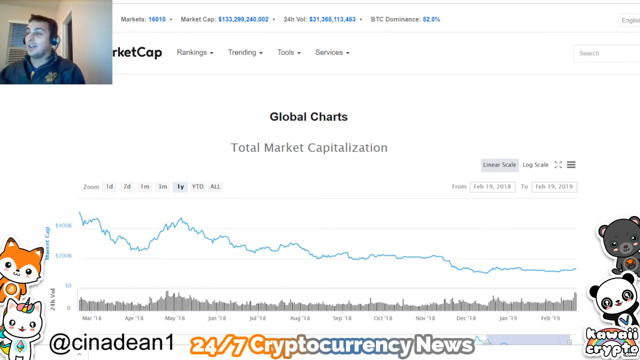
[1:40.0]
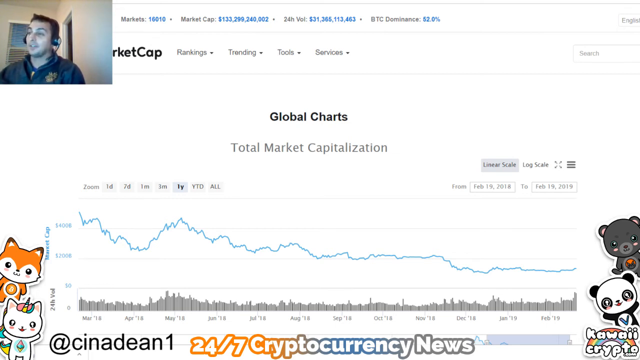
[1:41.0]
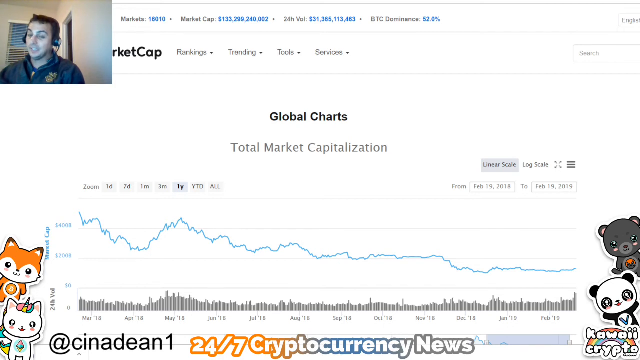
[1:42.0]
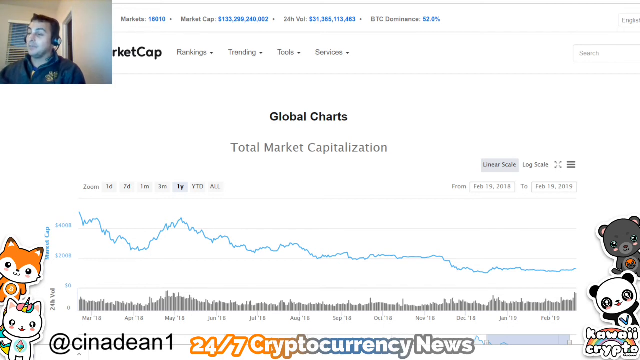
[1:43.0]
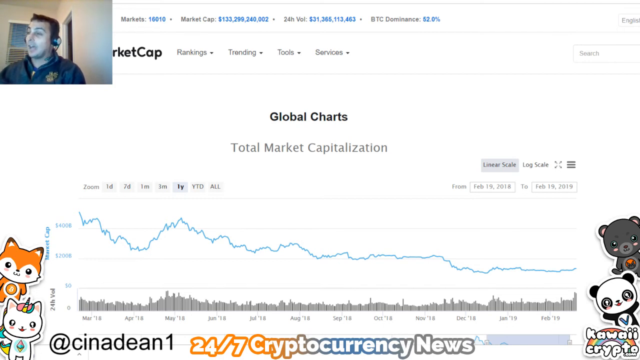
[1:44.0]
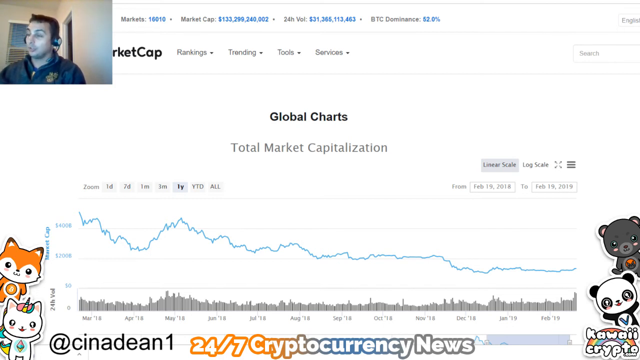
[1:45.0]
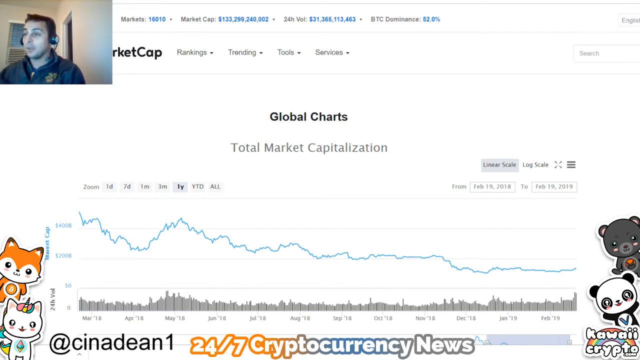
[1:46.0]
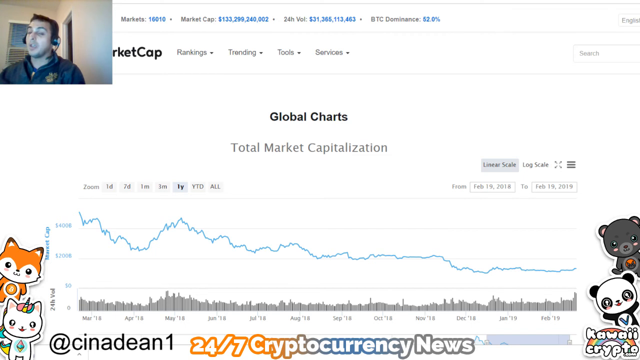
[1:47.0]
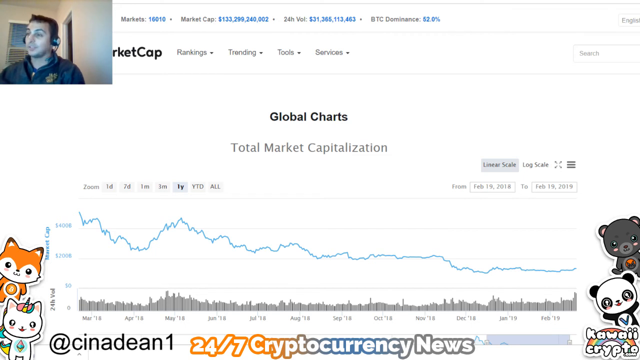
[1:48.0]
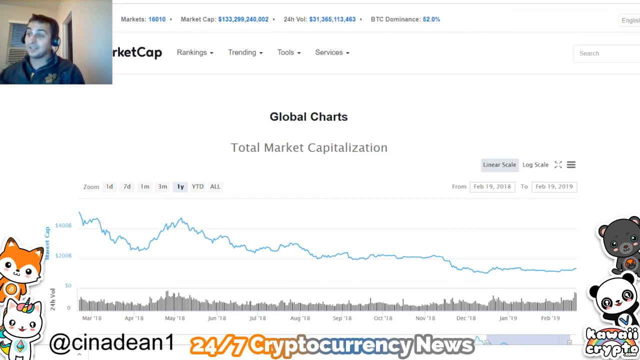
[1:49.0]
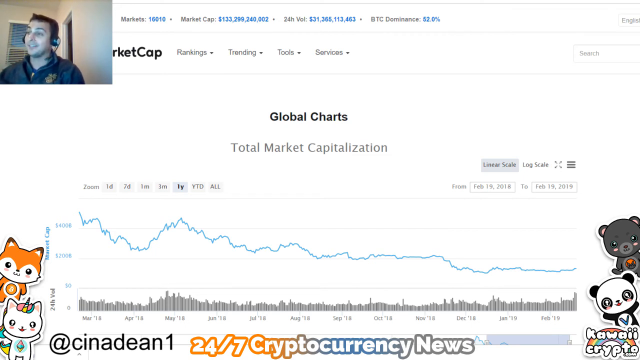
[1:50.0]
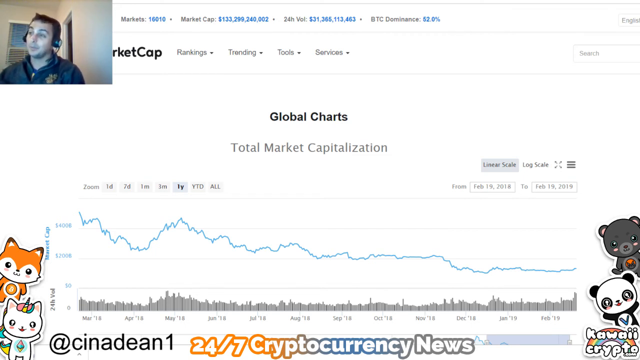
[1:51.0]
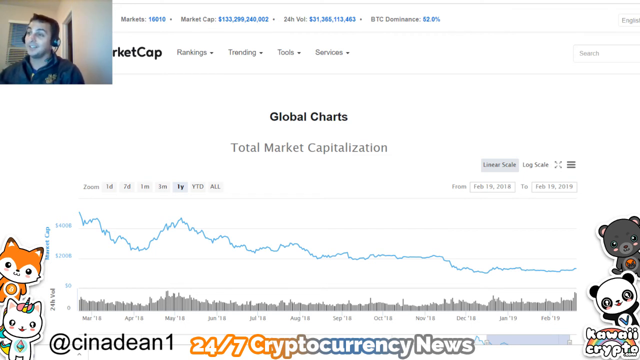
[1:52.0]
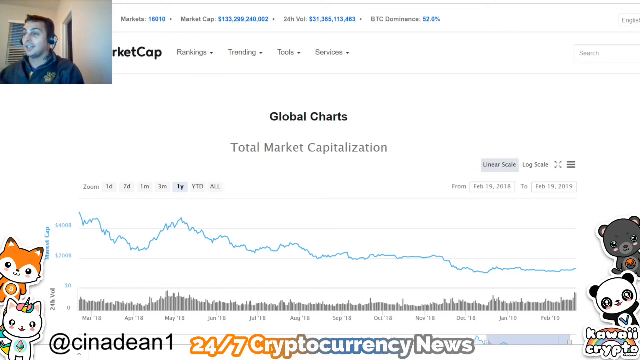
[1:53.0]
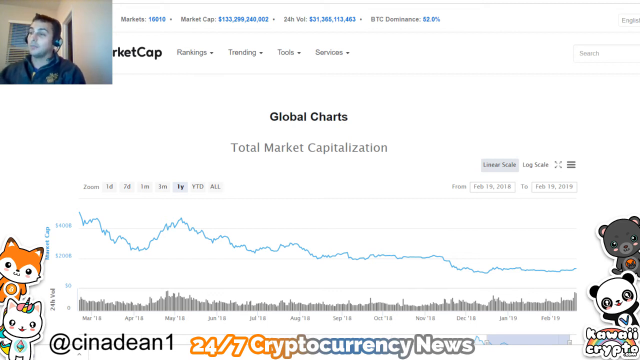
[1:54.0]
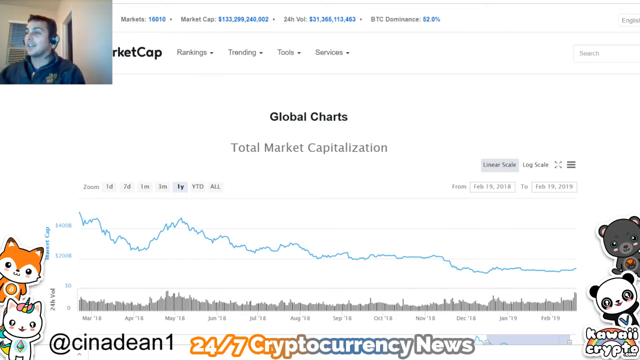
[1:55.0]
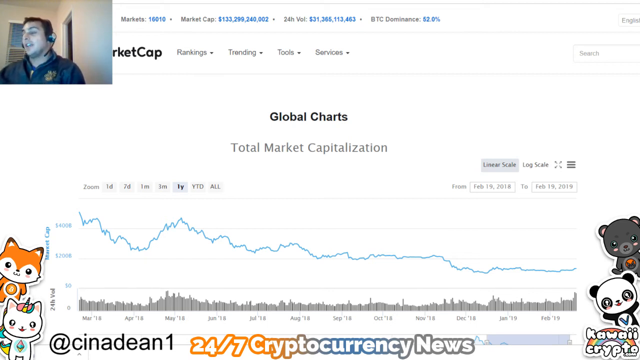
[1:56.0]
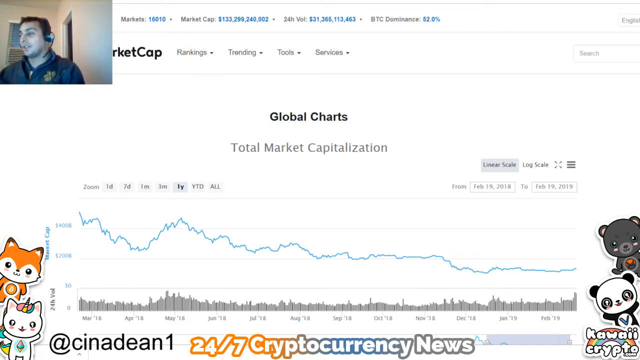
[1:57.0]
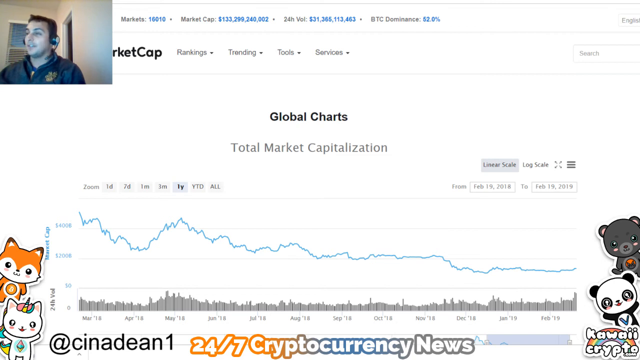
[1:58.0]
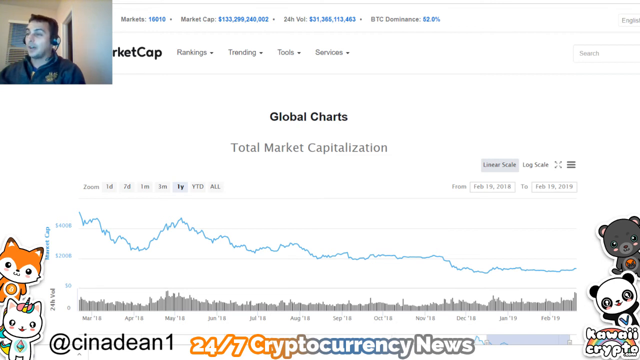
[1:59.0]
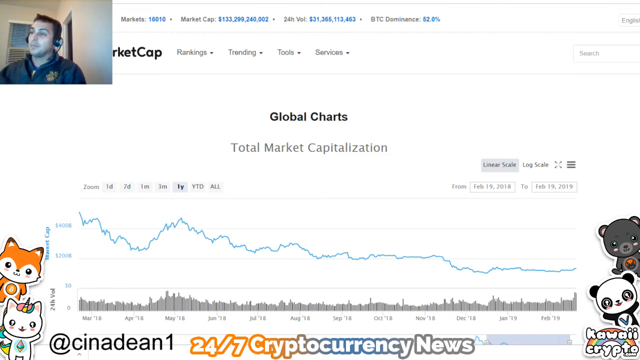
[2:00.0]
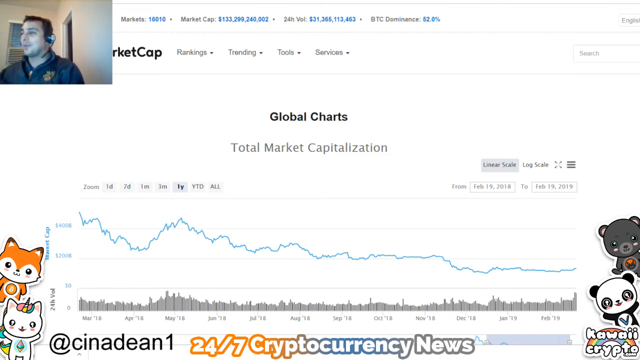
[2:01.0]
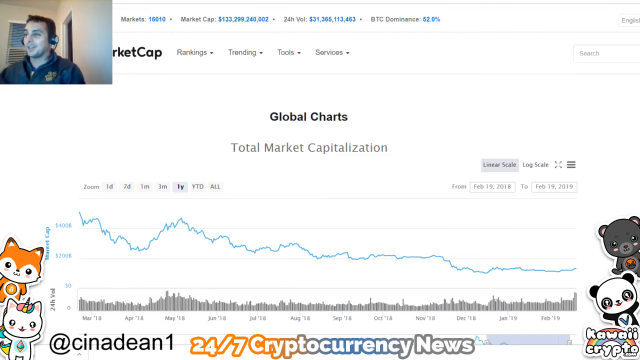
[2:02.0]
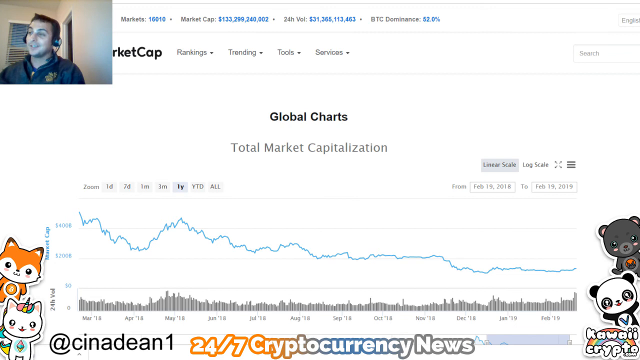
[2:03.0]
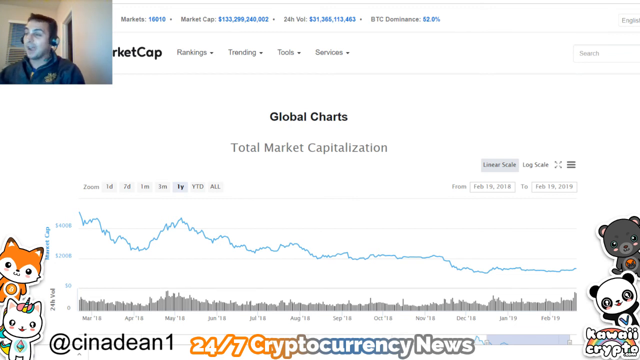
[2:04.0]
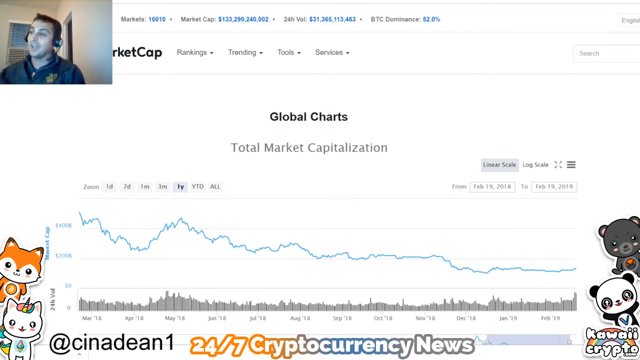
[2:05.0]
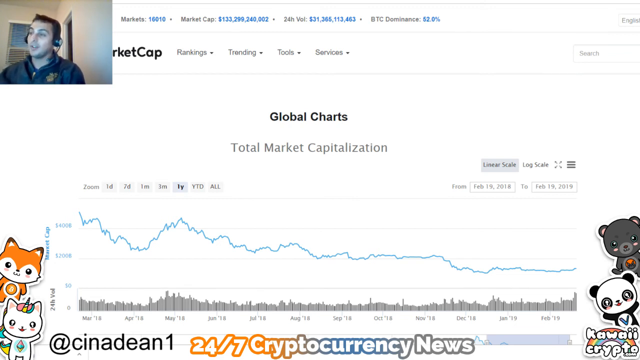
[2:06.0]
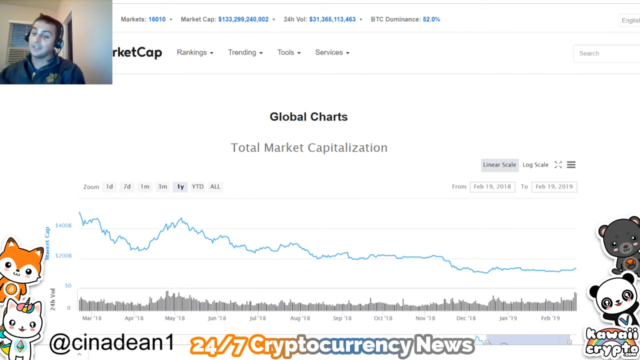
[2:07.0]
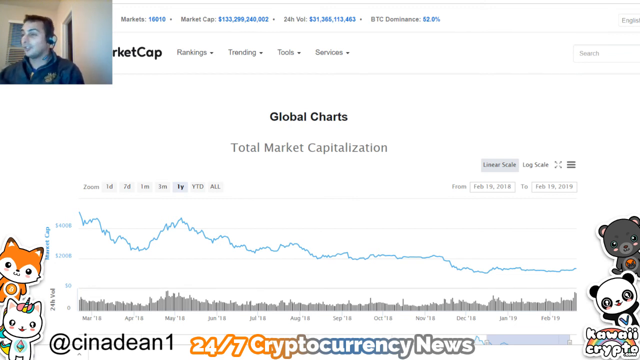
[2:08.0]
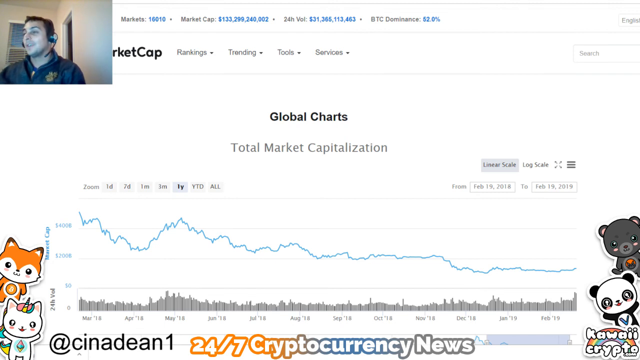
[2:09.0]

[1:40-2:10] The kawaii crypto bears remain on screen: the orange fox, the unicorn, the grey koala and the panda. The text "Cinedine1" is written, apparently his social media handle, along with the label "24x7 cryptocurrency news". At the top left is his webcam, showing a well-dressed man with a little bit of hair and a headset on. The static screen recording shows the global charts of the total market capitalisation and its evolution over one year while he comments on it.